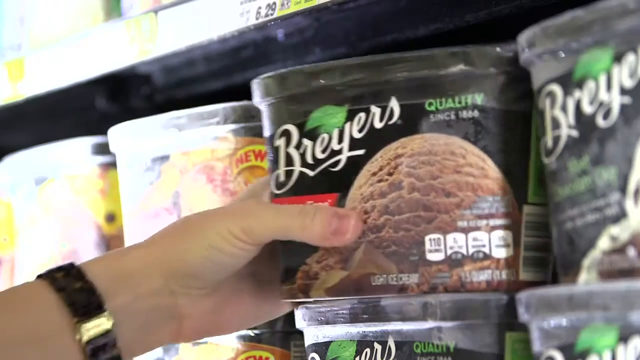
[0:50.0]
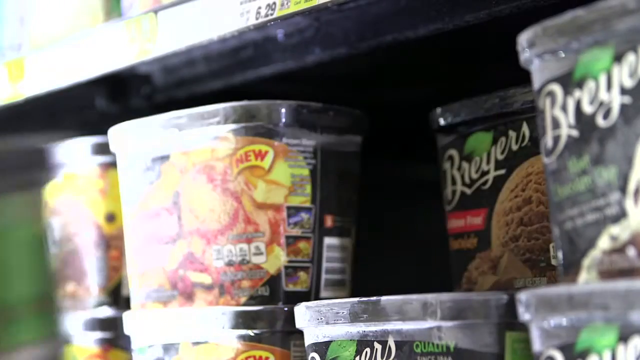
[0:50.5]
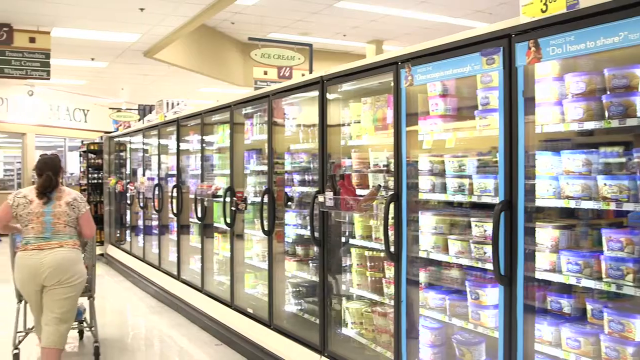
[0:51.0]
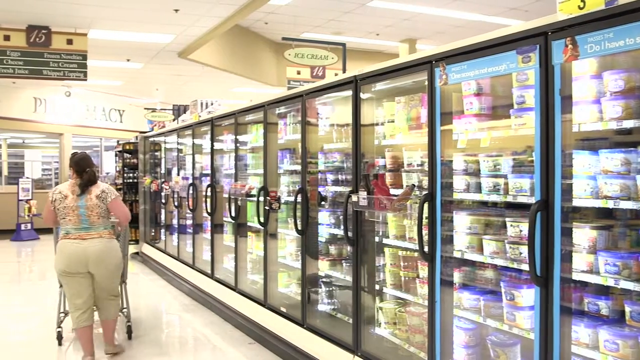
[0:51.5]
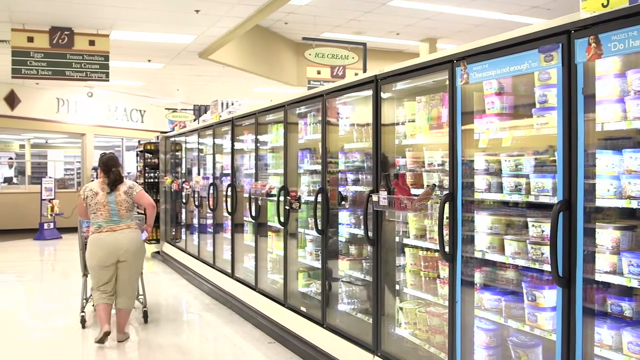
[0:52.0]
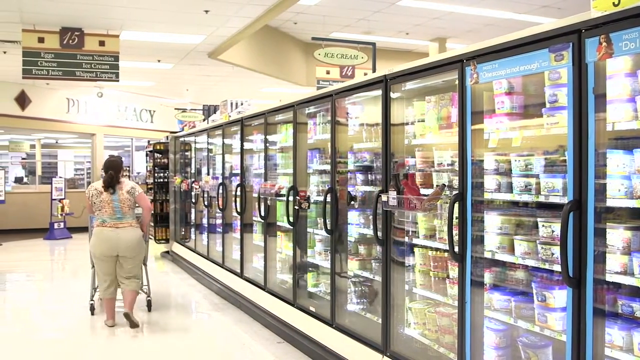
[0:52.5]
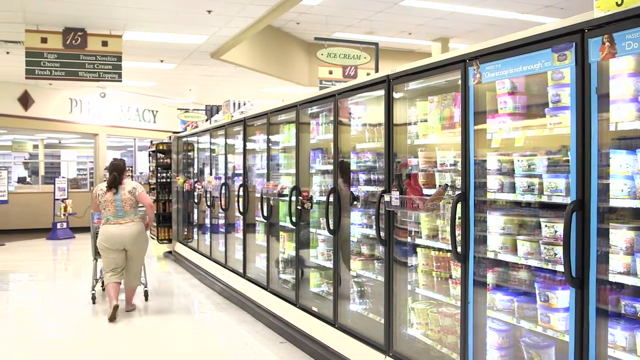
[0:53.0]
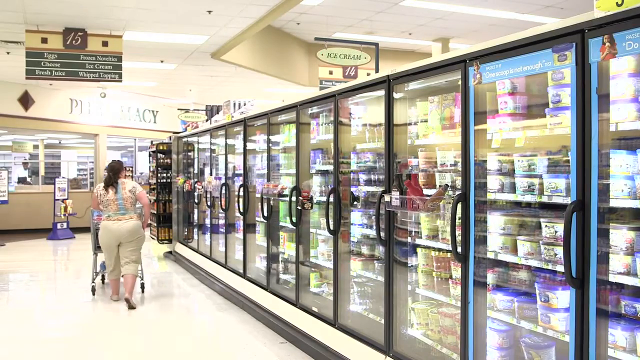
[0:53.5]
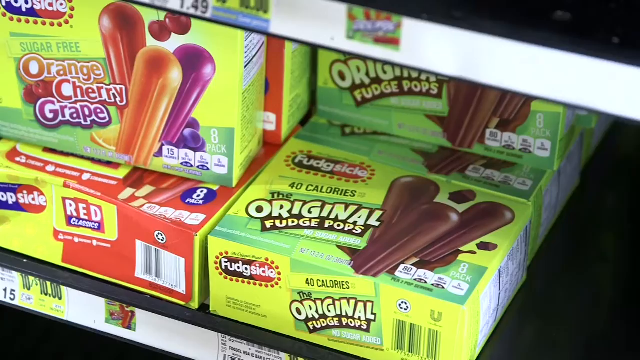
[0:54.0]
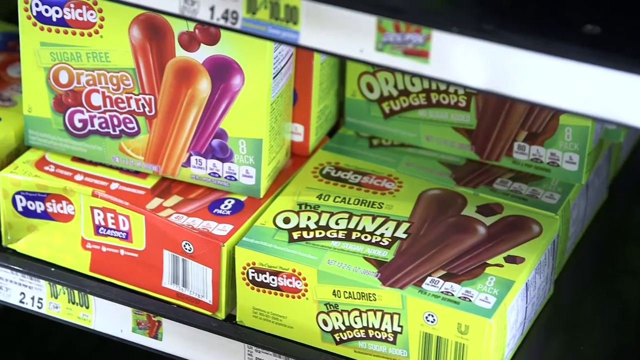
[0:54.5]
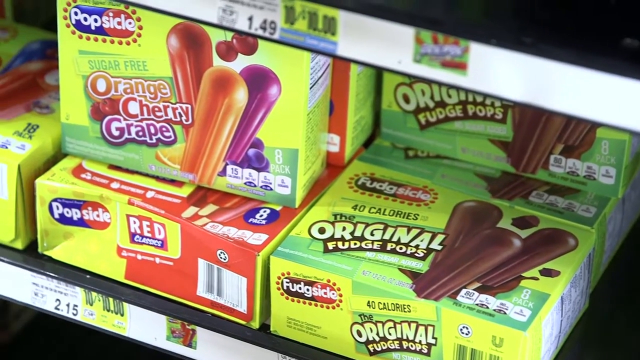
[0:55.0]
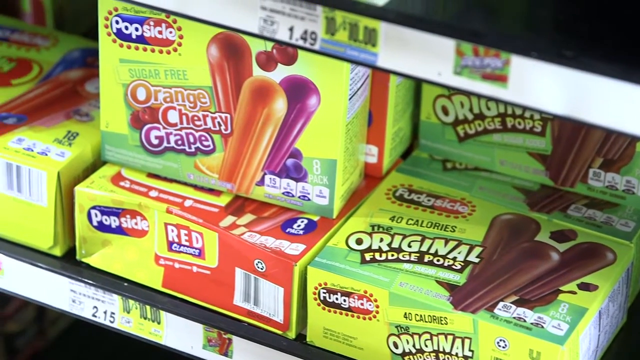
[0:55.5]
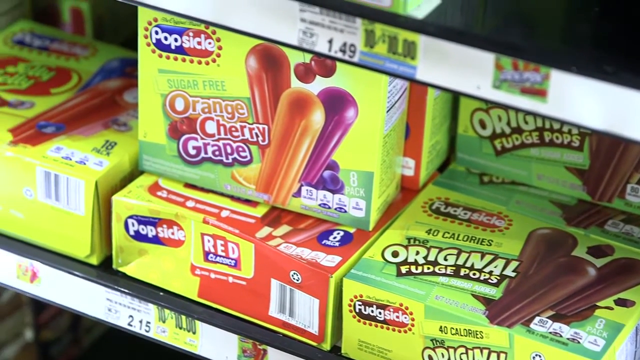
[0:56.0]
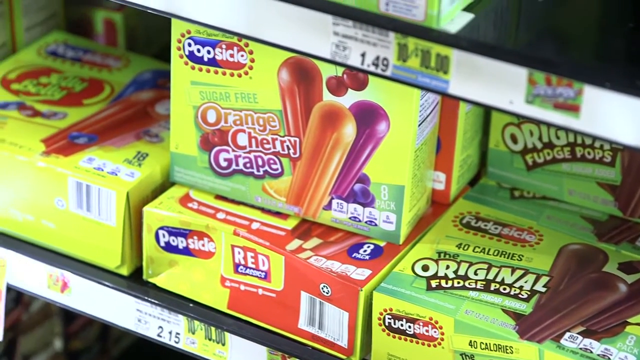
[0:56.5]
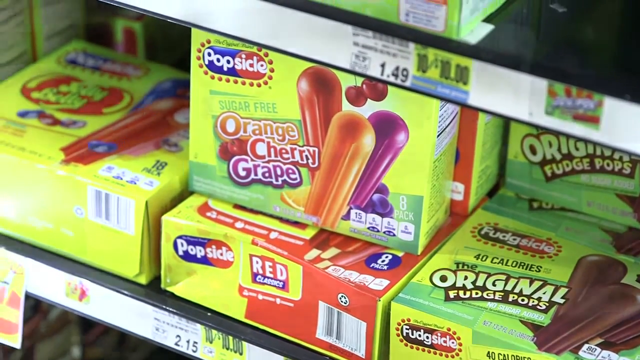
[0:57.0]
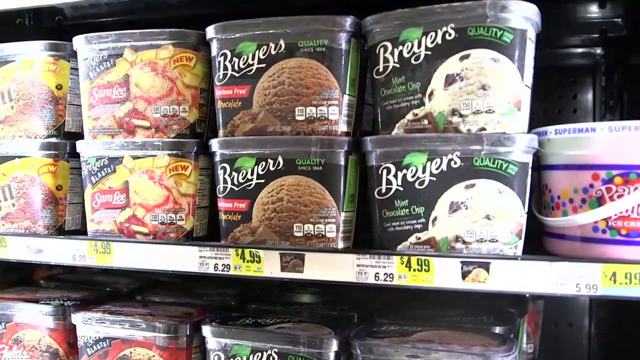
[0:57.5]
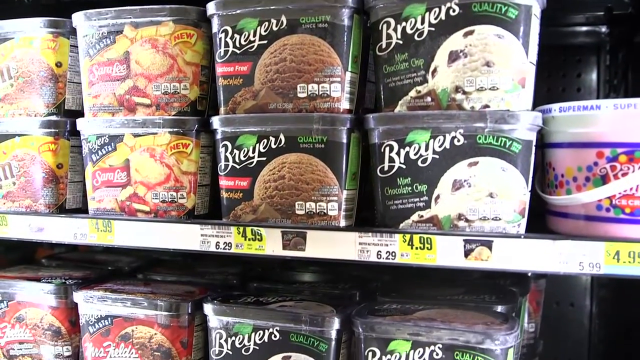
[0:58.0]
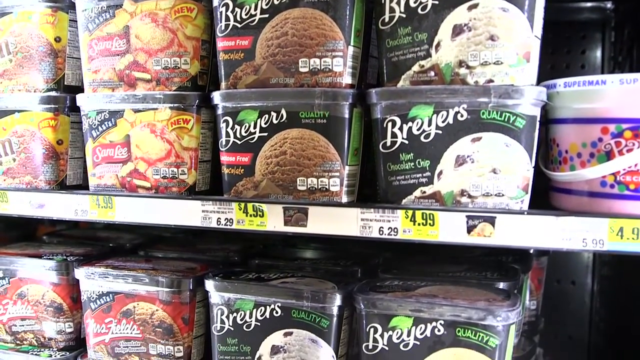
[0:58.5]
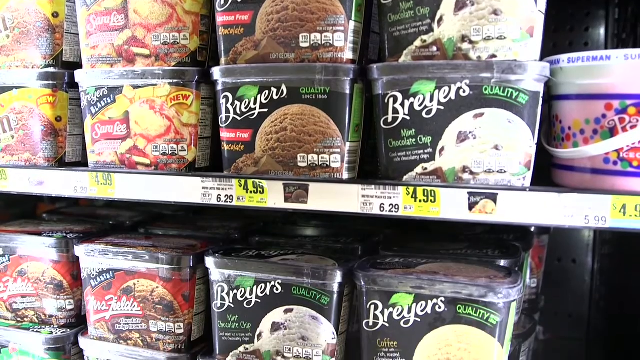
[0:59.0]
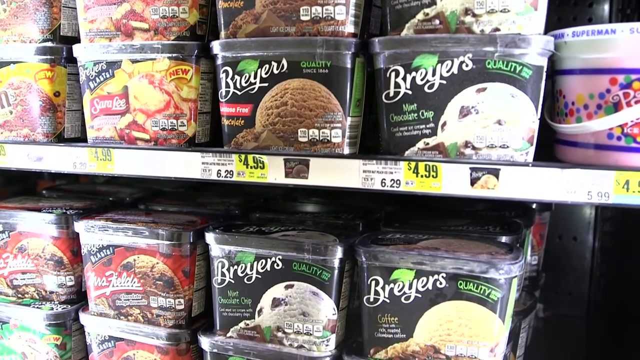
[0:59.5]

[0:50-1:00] The video transitions back to the warehouse, where Klondike bars are spread out over the conveyor belt, separated by a plastic sheet. The camera zooms in on the Klondike bars being packaged in squares with very silver wrapping that glares in the light. The blue logo "Klondike Original" with the polar bear is placed in the center of each square. As each one is pushed forward, the scene transitions to what appear to be fillers with some red color in them, spilling into small molds that shape the ice cream. Machinery contraptions then hold what appear to be popsicle sticks. Finally, what appears to be strawberry shortcake is packaged as Good Humor boxes are presented.